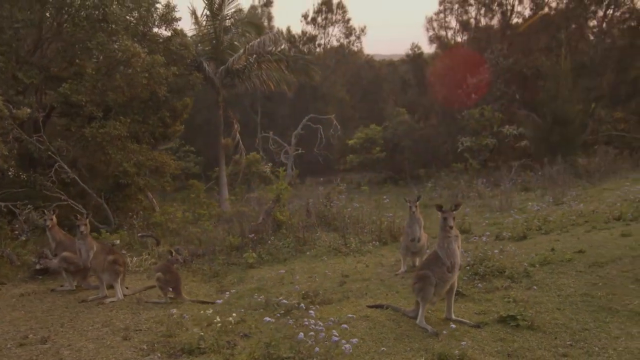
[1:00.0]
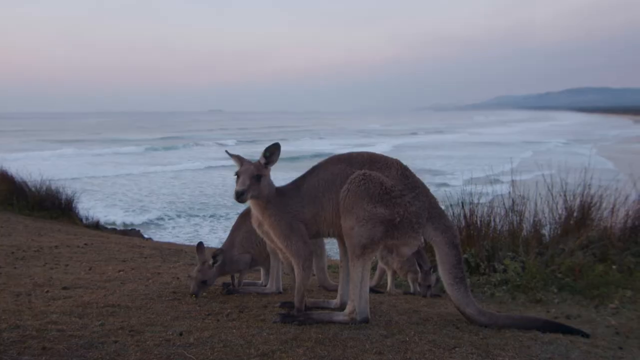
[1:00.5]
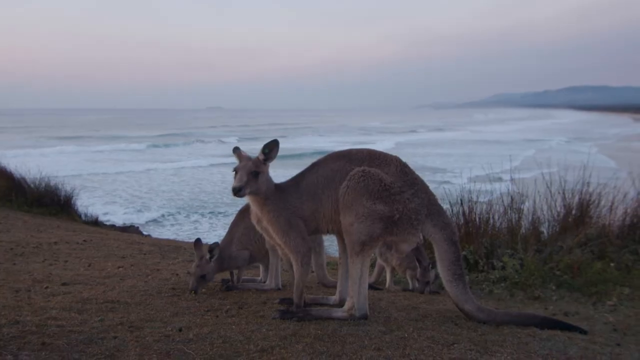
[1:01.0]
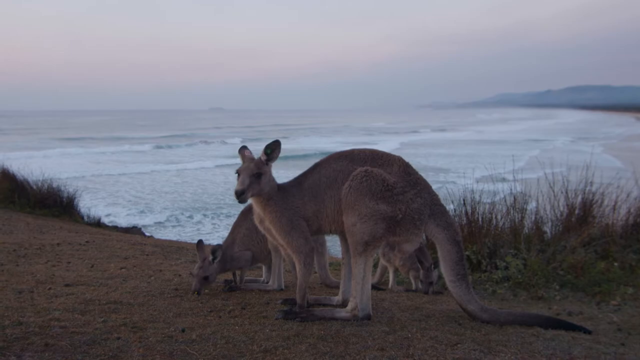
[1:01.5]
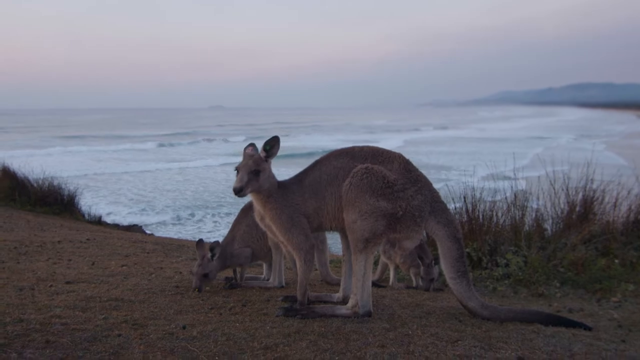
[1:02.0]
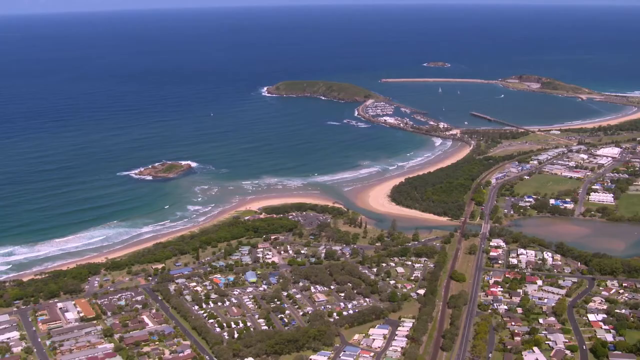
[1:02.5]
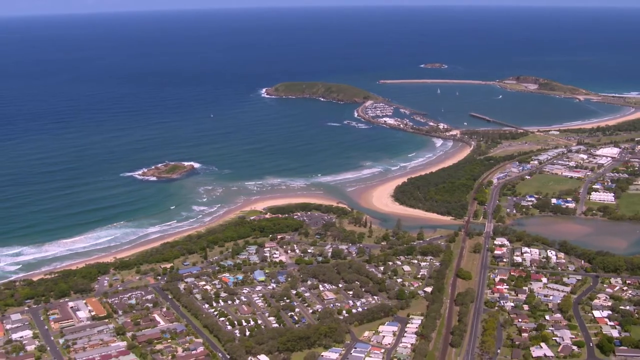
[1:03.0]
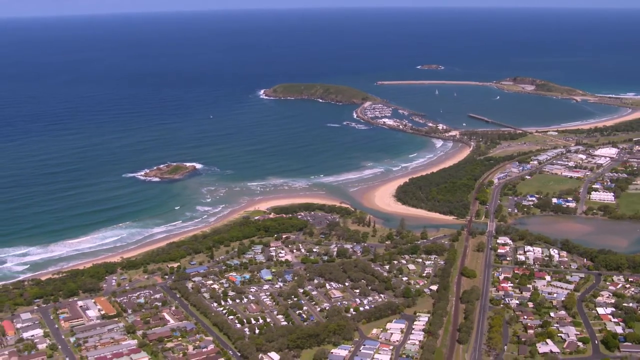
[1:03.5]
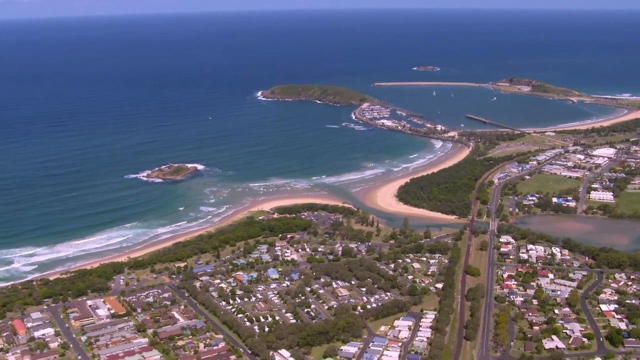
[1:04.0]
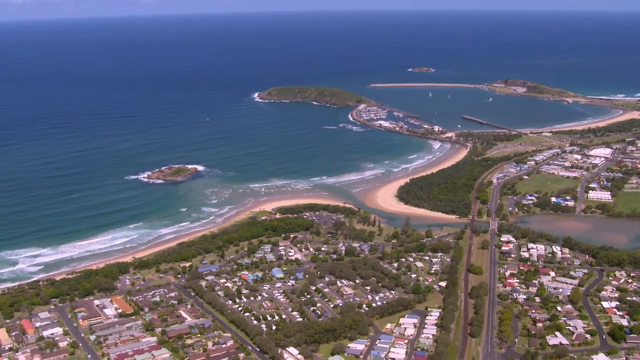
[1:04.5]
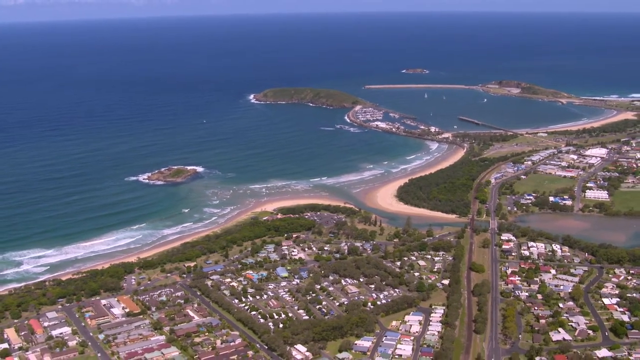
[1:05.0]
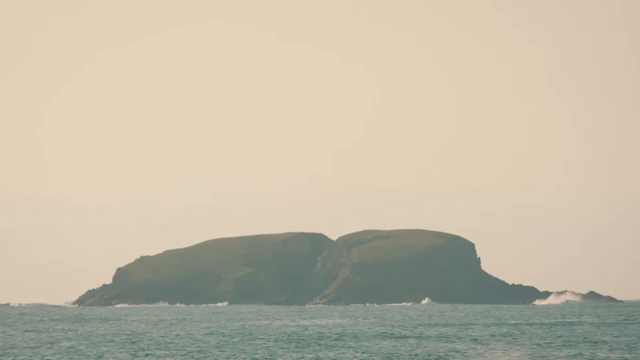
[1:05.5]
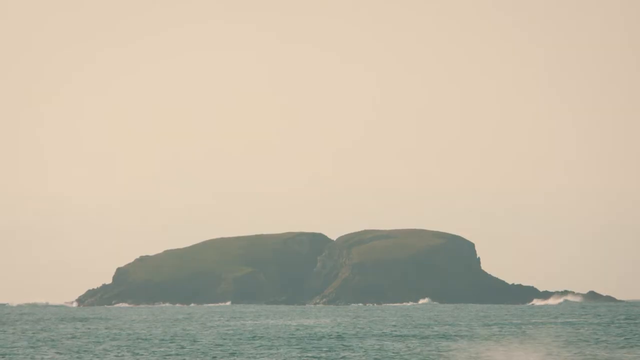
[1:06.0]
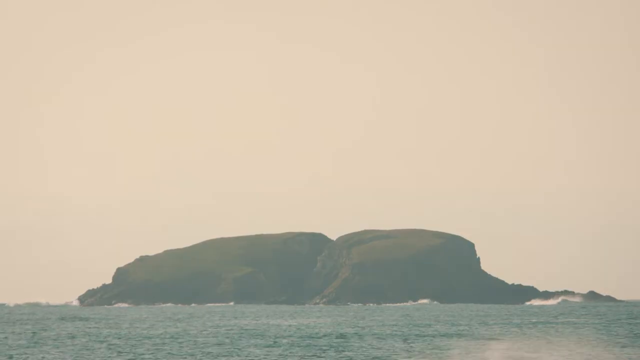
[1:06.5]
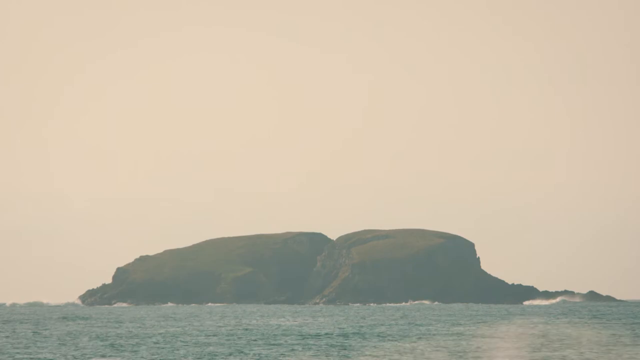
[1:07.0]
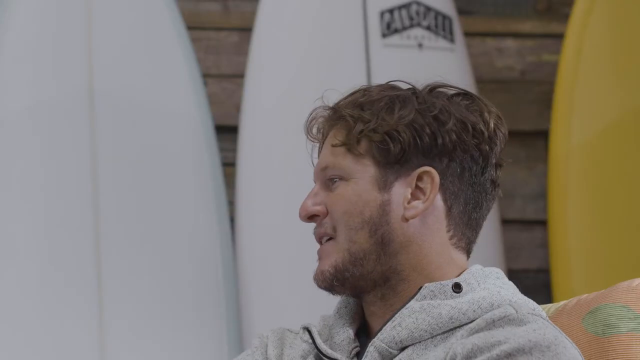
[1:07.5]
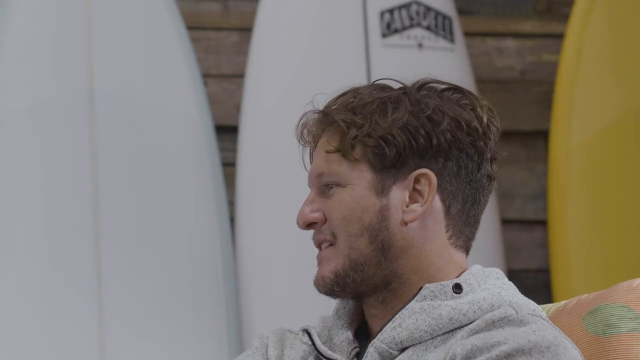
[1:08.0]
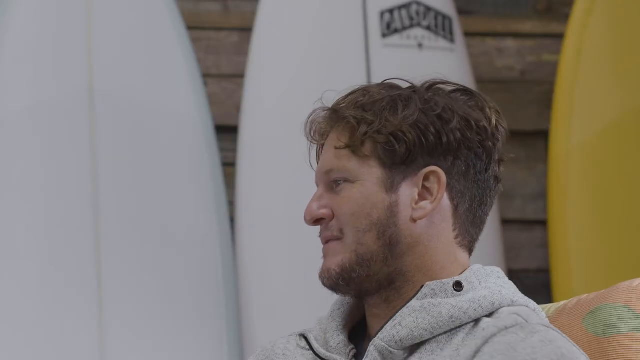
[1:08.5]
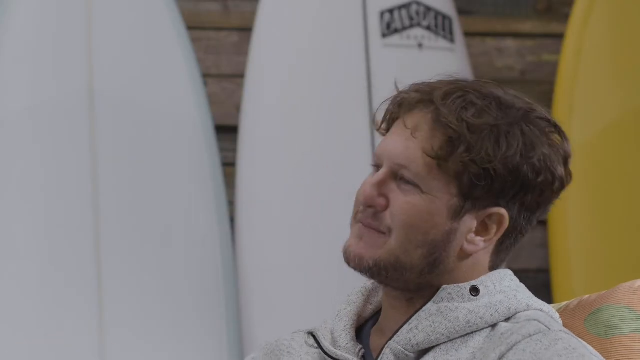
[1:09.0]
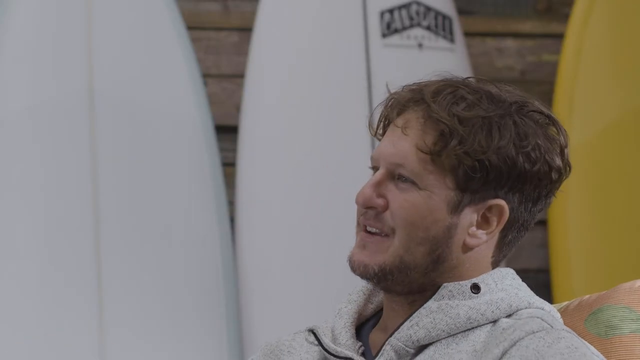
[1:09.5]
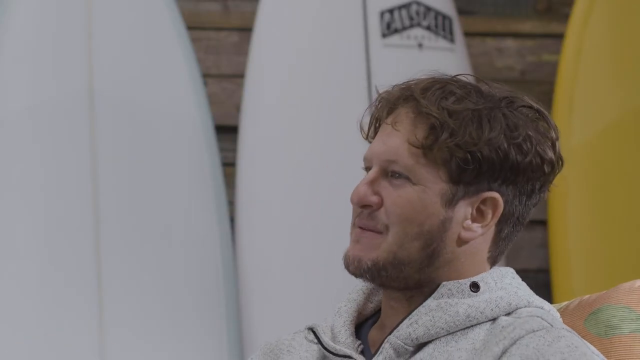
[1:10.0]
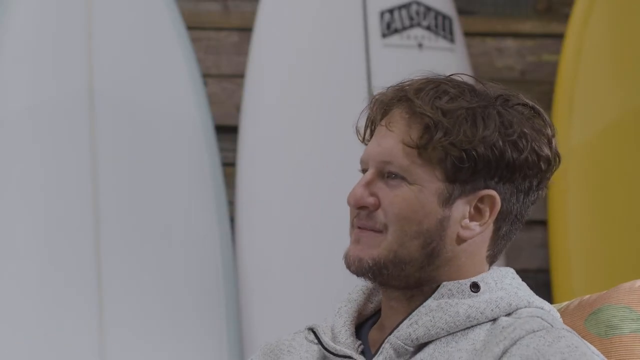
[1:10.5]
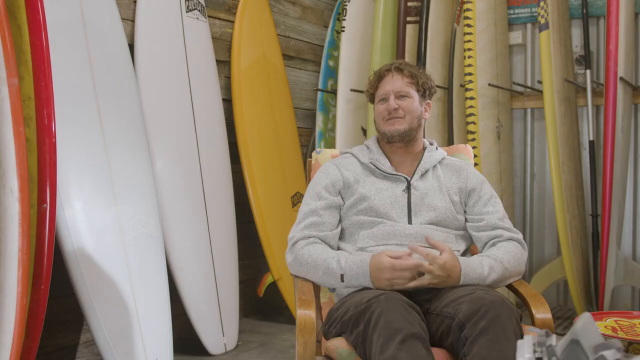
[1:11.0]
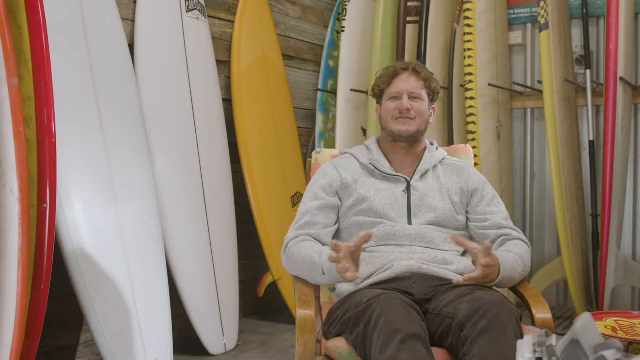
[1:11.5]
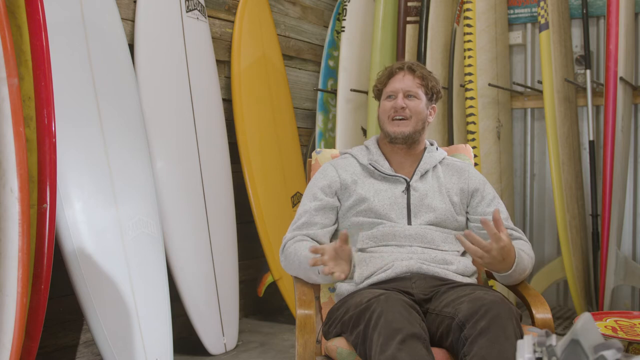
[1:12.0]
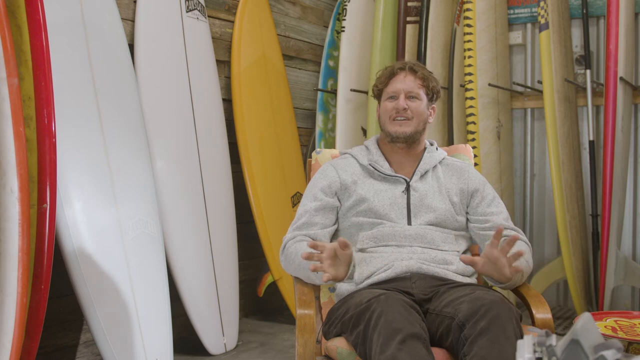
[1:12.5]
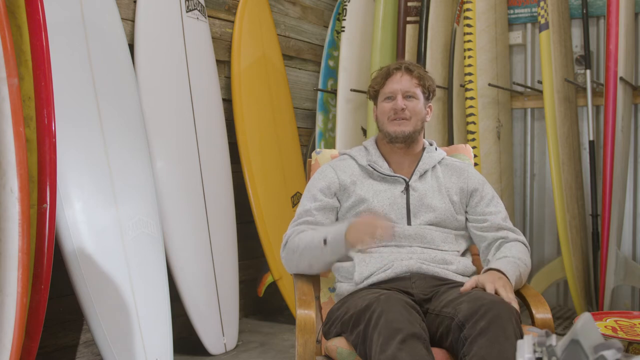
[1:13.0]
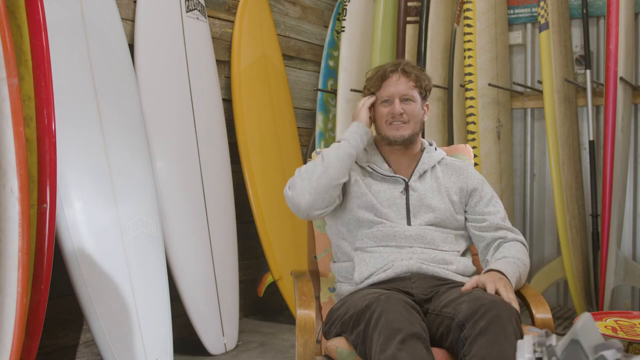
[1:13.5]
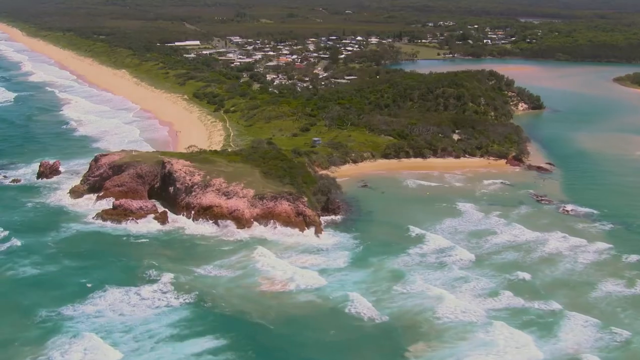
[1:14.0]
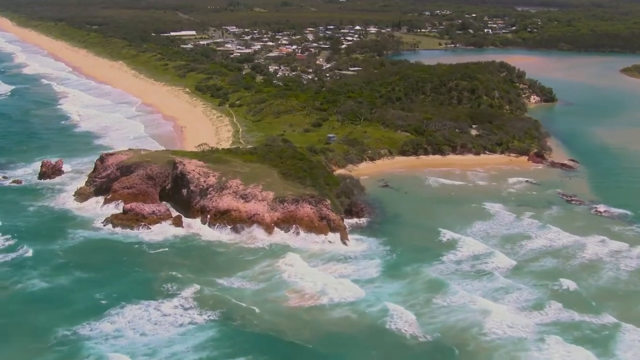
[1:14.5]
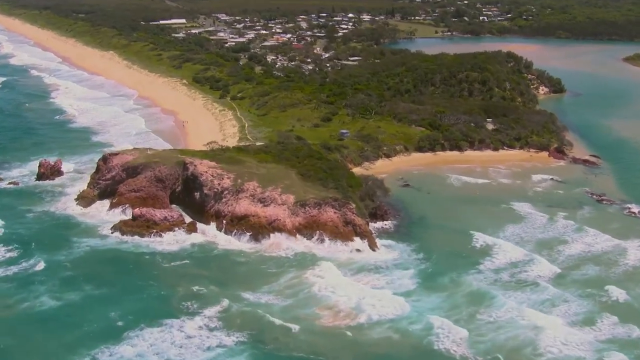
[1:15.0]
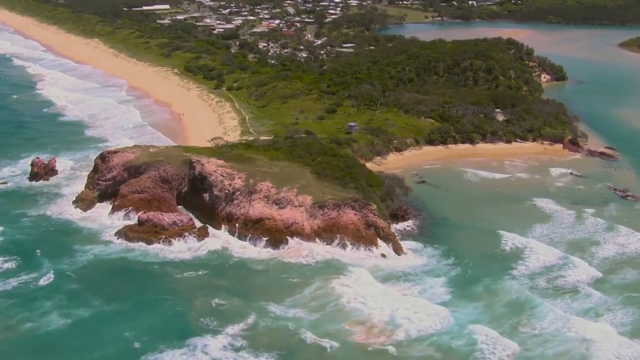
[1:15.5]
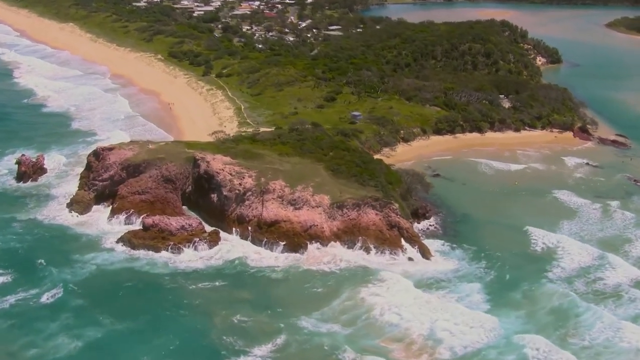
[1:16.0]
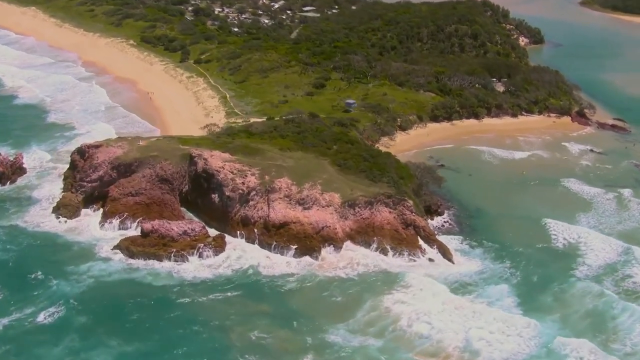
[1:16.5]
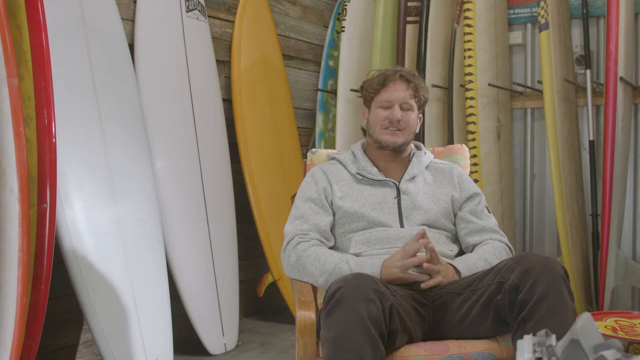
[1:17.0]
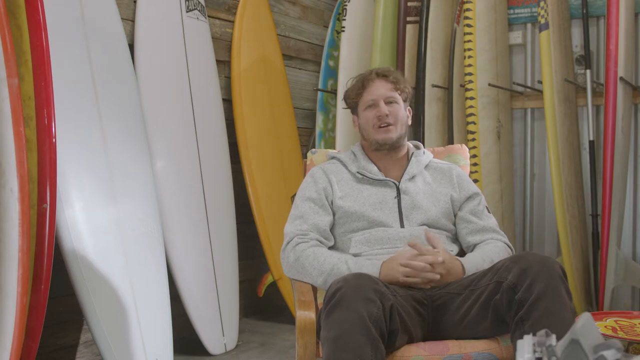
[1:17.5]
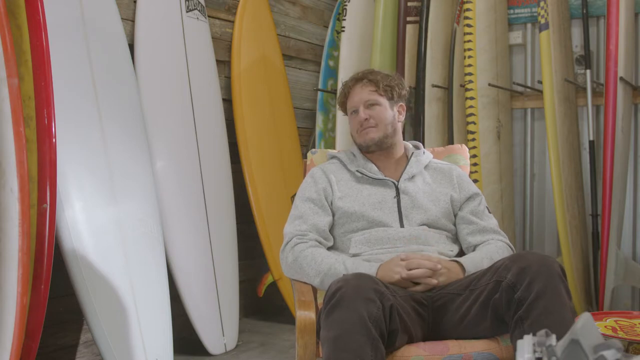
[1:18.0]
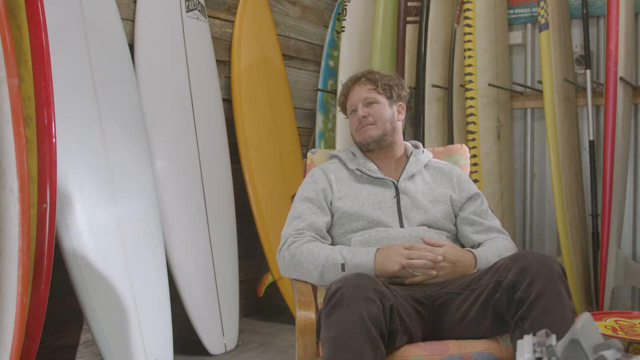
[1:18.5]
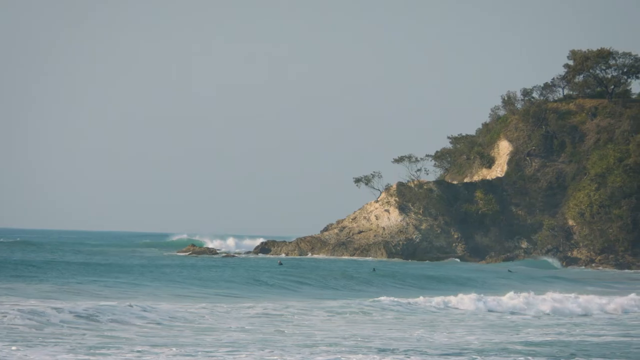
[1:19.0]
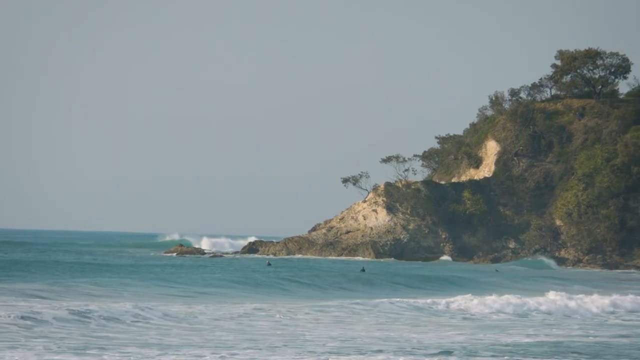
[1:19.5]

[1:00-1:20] The kangaroos remain in view, with a tree line, and then they are in a more open area with no trees. The scene switches to what is probably a mother kangaroo and two younger ones with the ocean behind them; they do not appear to be on the beach but are in the sand on a slightly raised part, and the young ones are either sniffing the sand or getting something out of it. Next is another beach, clearly in a town area, with roads and houses and a couple of pieces of land that go pretty far out into the water. An island lies probably 500 feet off the beach. Then another landform appears that either sits out in the ocean or extends into it, under a hazy pink sky. The video cuts to a close-up of the man's head as he talks, with two white surfboards and part of a yellow surfboard behind him, then to the full view of him sitting.